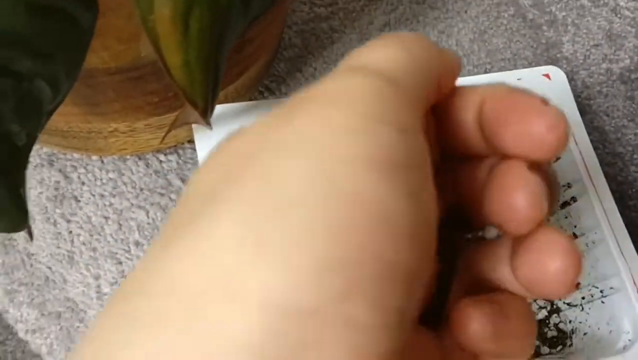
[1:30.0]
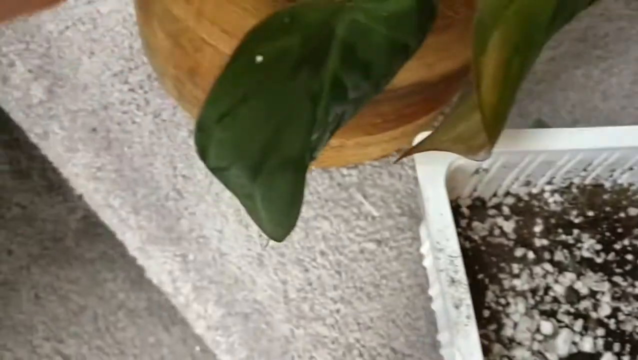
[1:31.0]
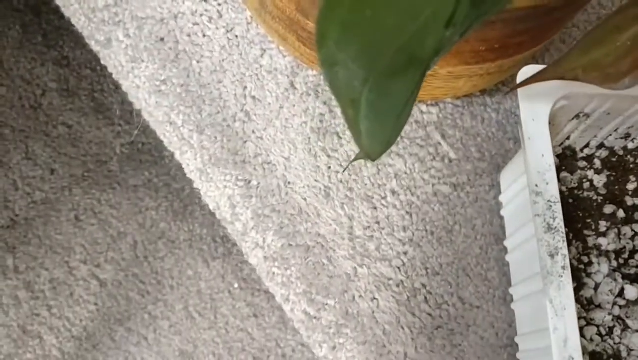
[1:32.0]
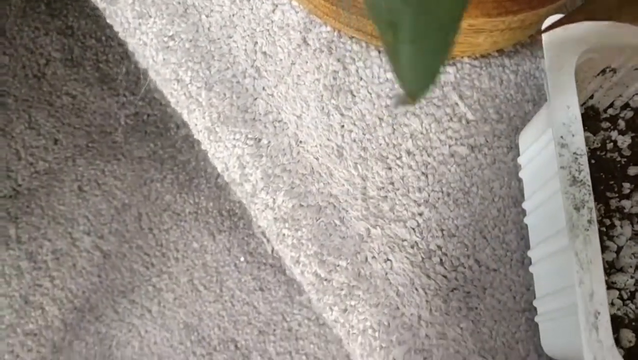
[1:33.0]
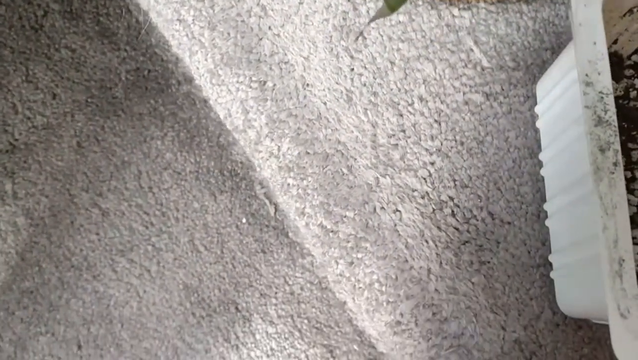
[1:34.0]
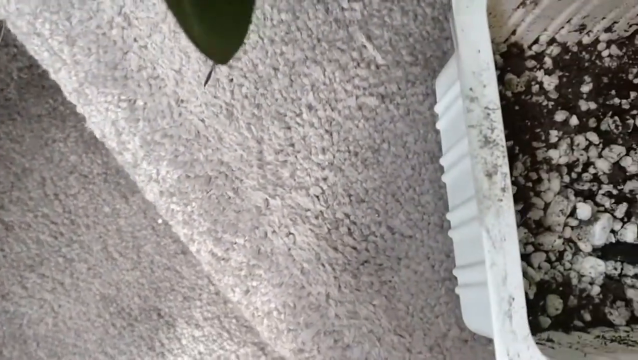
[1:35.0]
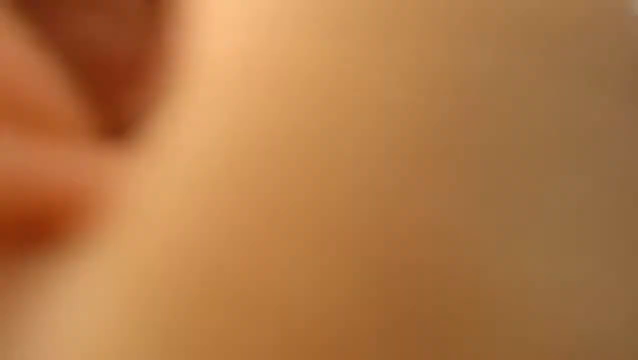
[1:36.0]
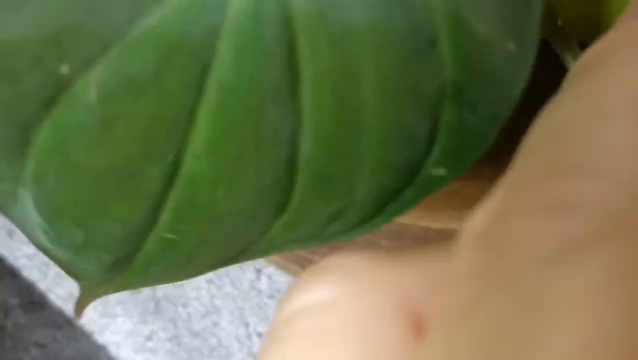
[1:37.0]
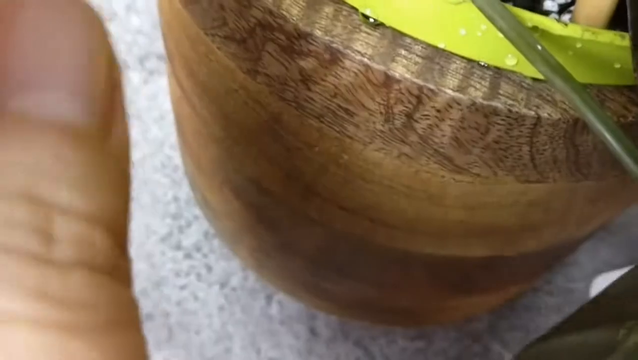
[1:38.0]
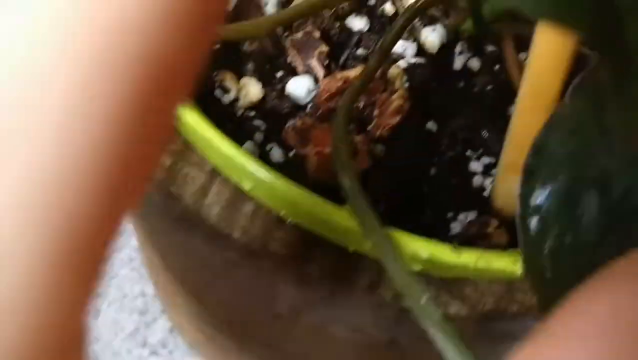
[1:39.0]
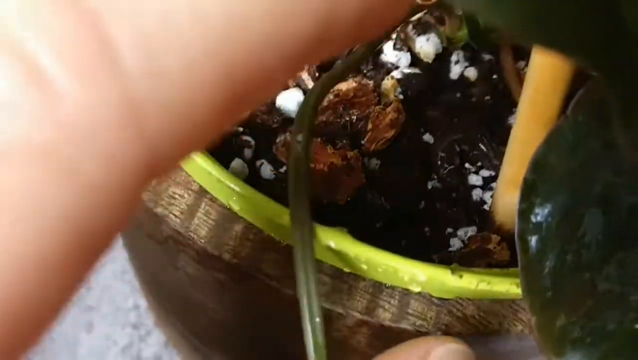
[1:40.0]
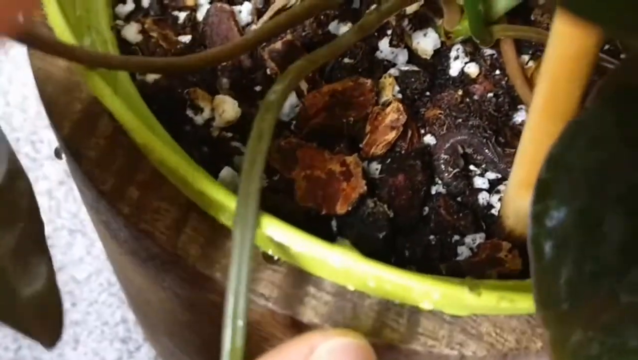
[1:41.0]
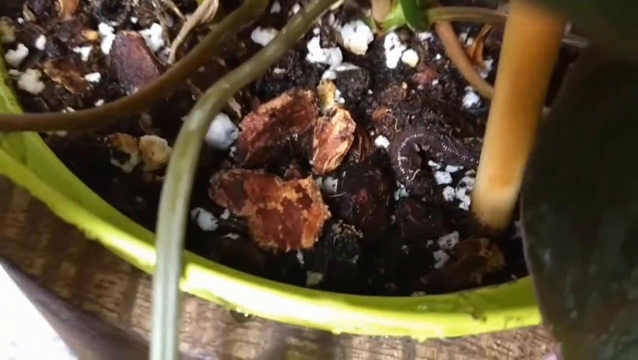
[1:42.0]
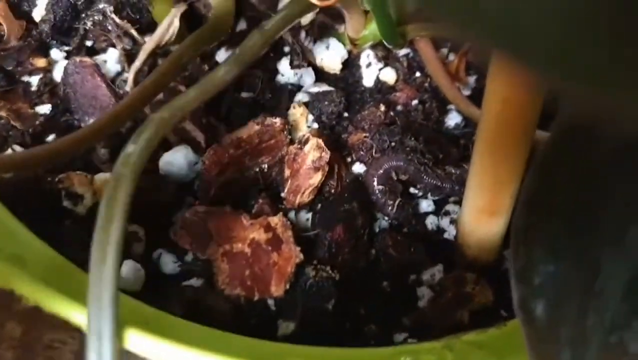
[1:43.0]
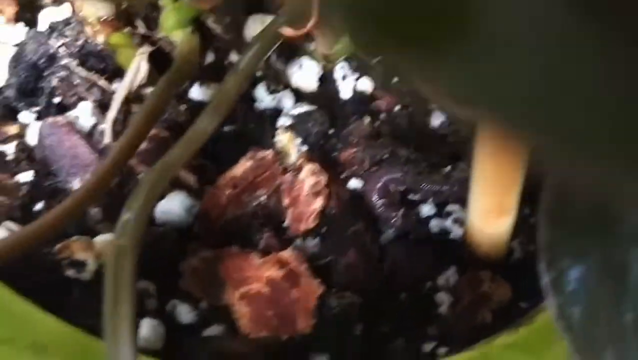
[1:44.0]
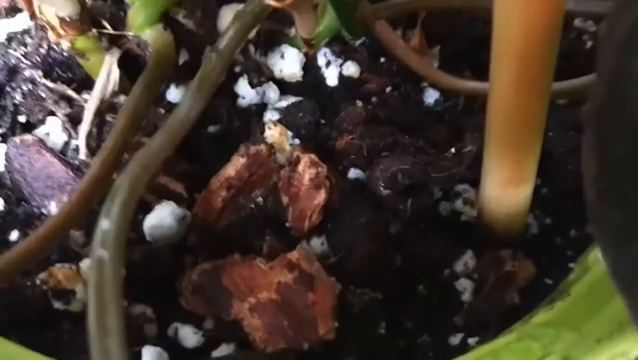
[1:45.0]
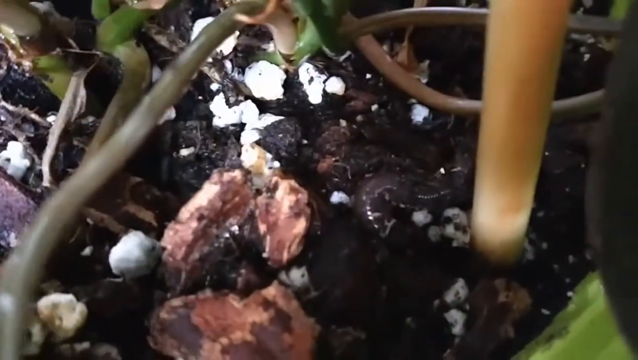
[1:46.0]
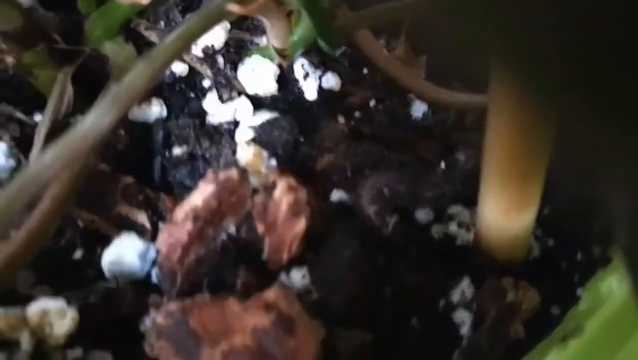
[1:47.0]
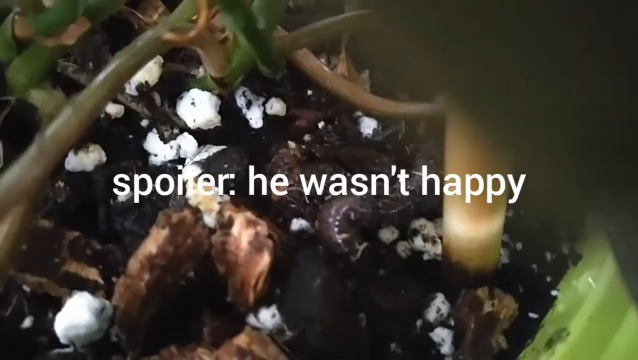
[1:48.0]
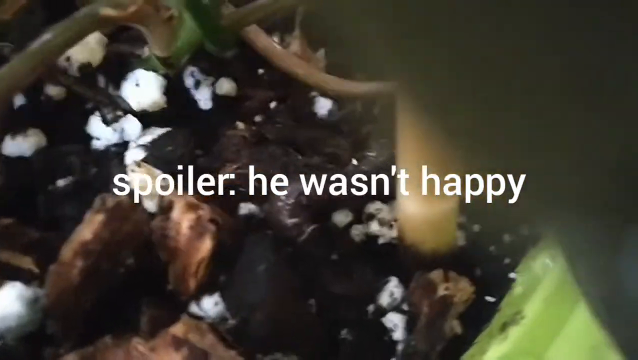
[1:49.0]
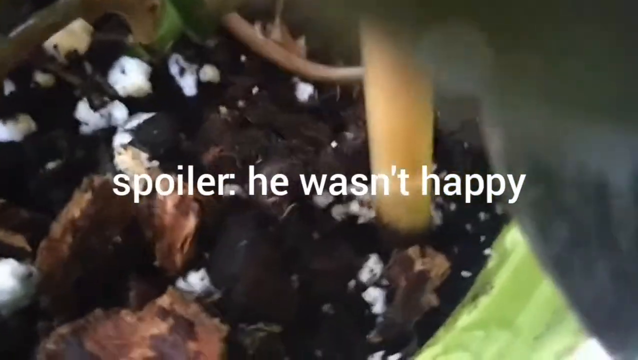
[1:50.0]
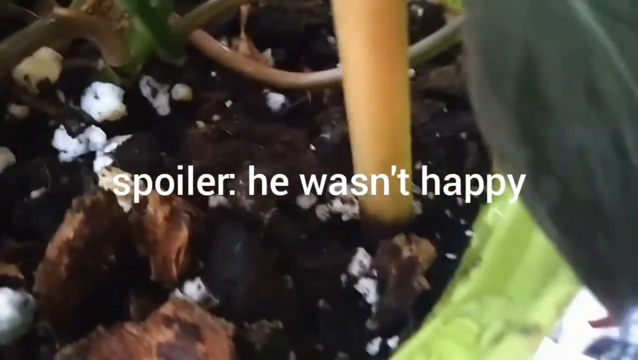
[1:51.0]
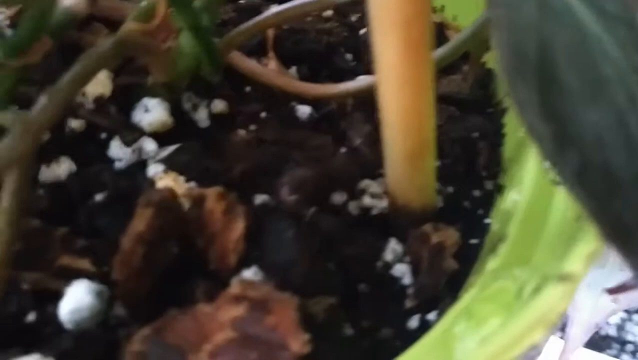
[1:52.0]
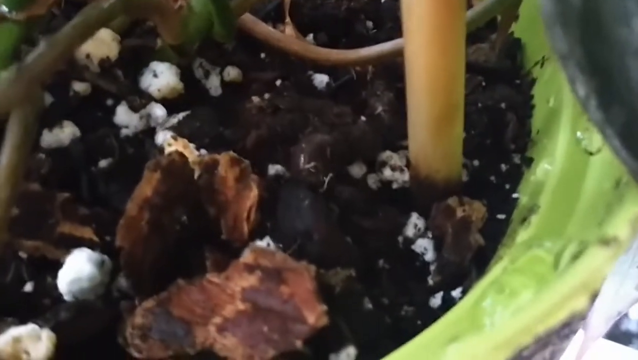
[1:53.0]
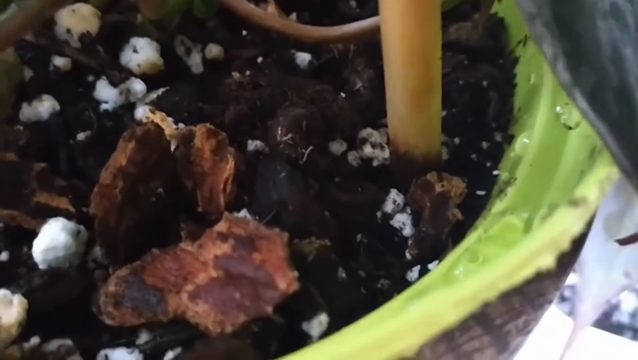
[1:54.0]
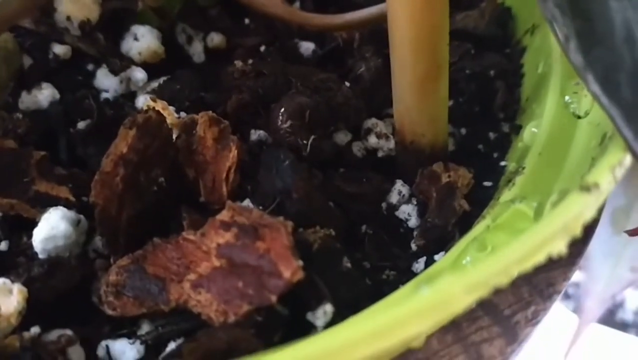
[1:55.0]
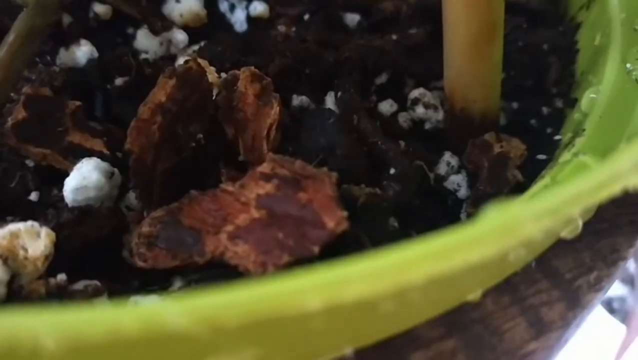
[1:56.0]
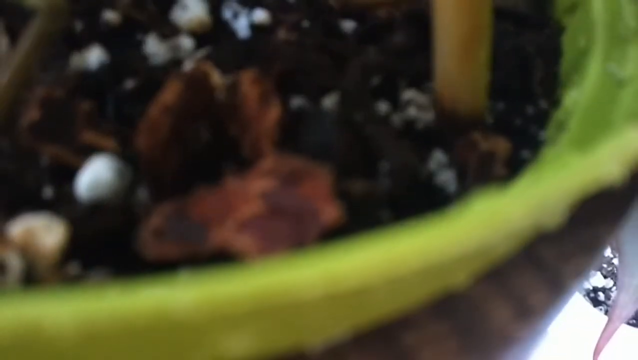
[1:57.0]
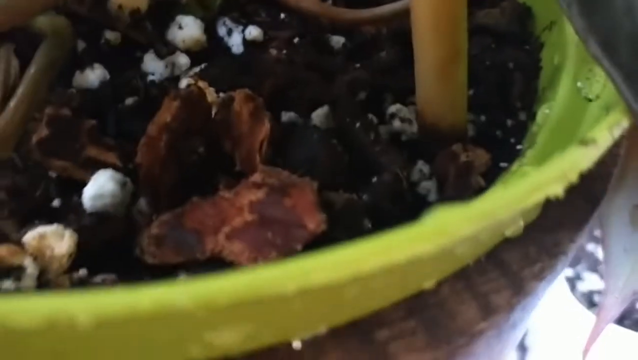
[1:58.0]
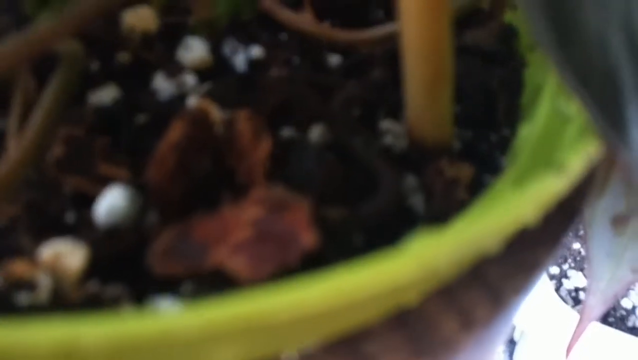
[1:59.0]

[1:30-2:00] A hand lifts out of a square plastic container holding dirt and small white rocks. The camera is probably held in the person's other hand and is a little shaky. The carpet next to the container is glimpsed and the view lingers there for a few seconds. The hand comes back into the picture and the camera zooms in on a plant next to the plastic container. The plant now has a black earthworm in it, apparently taken out of the container and put into the plant. The worm seems to be trying to figure out its environment. Text appears: "spoiler, he wasn't happy." The earthworm tries to orient itself, then moves and slithers around inside the plant.